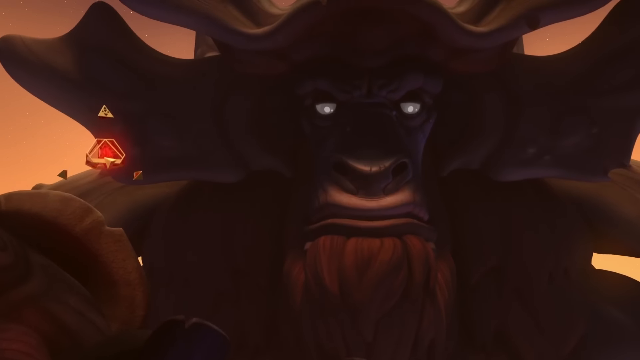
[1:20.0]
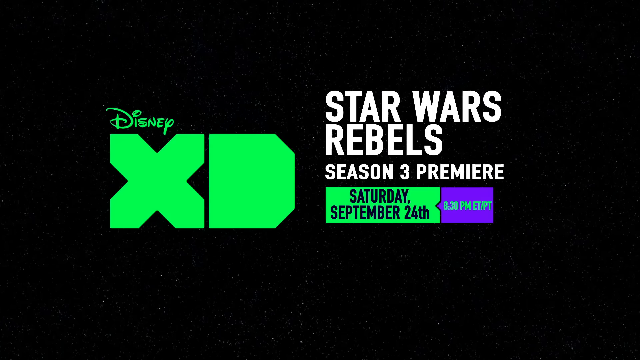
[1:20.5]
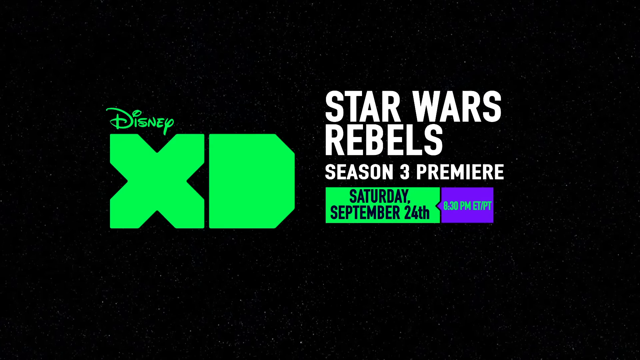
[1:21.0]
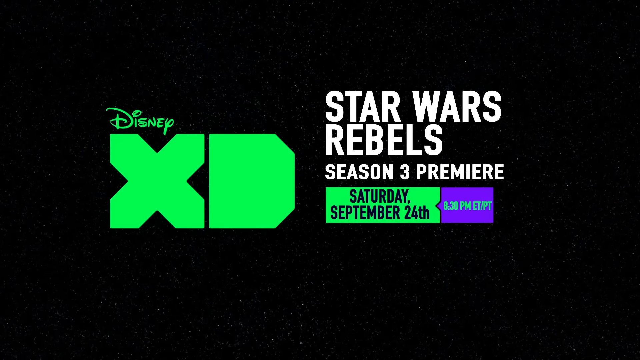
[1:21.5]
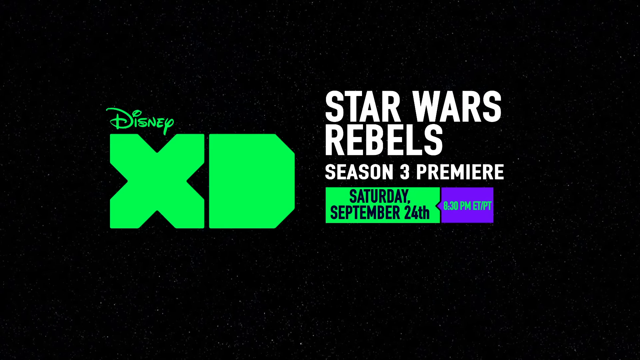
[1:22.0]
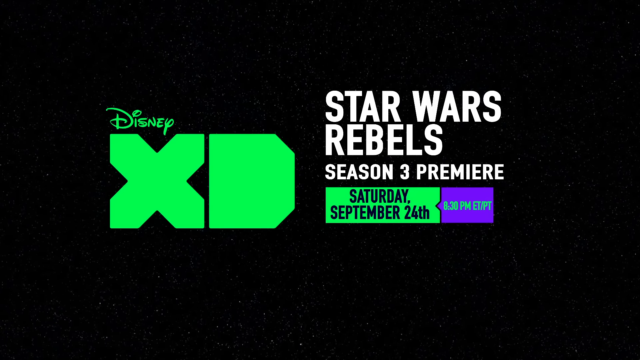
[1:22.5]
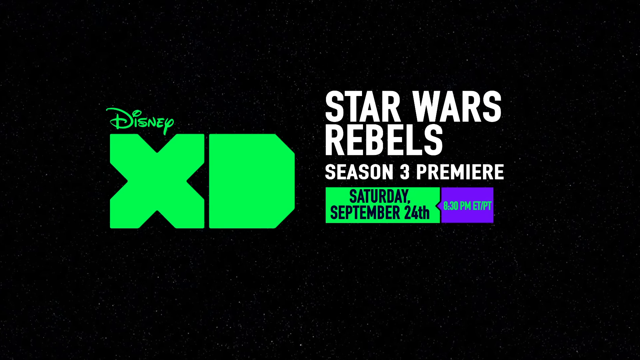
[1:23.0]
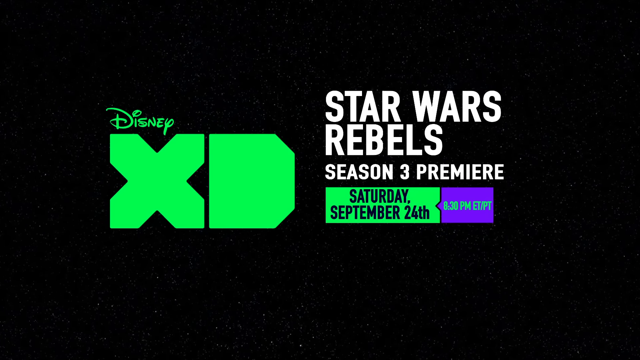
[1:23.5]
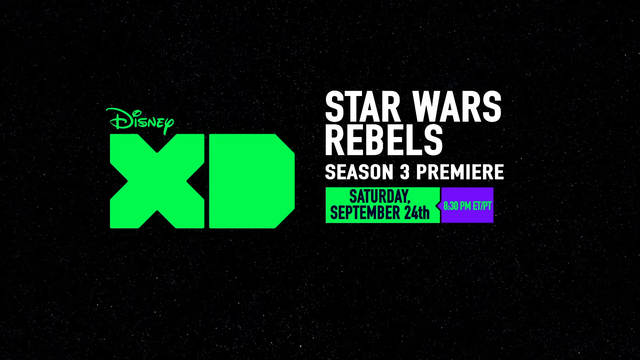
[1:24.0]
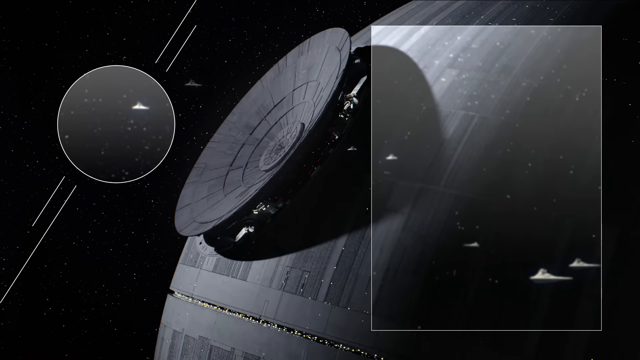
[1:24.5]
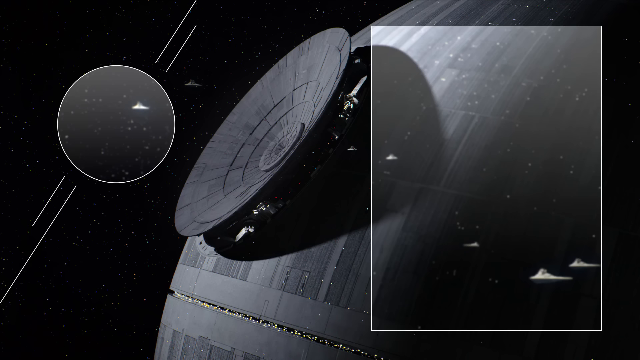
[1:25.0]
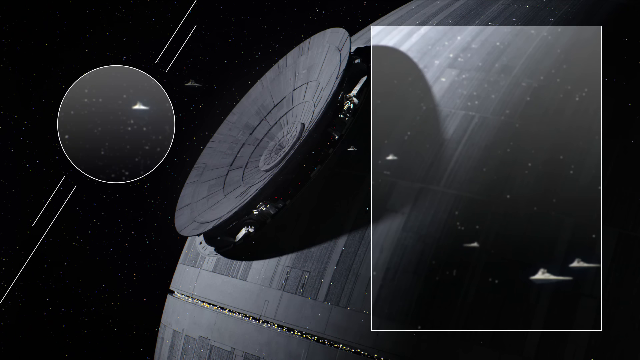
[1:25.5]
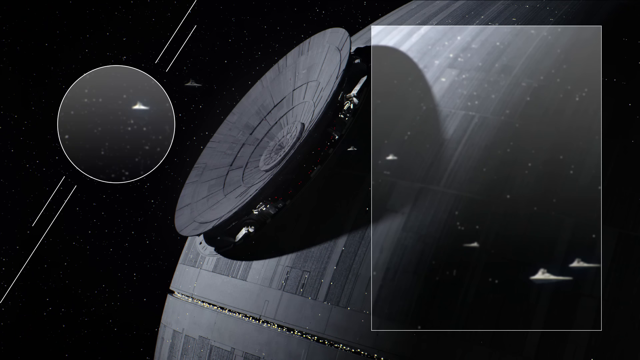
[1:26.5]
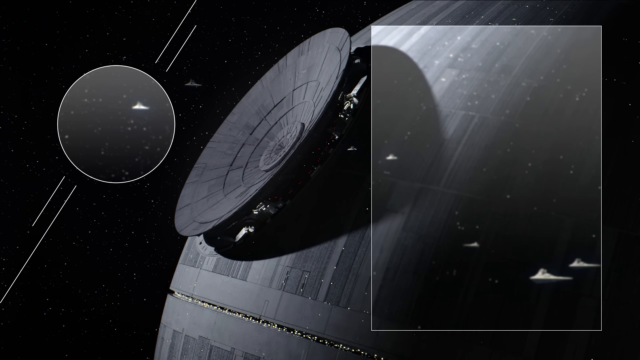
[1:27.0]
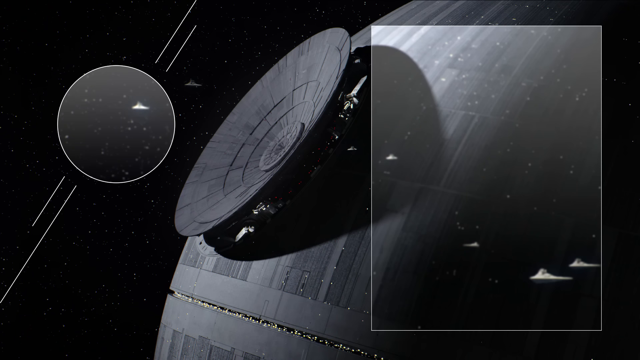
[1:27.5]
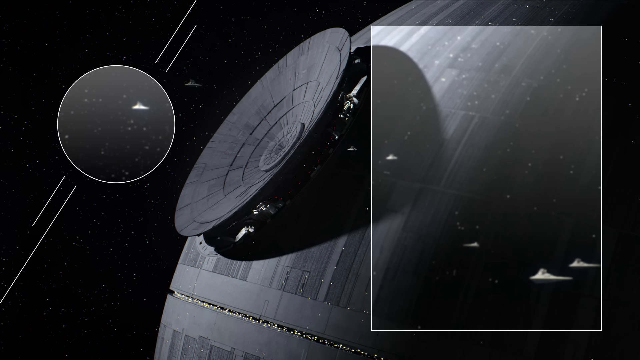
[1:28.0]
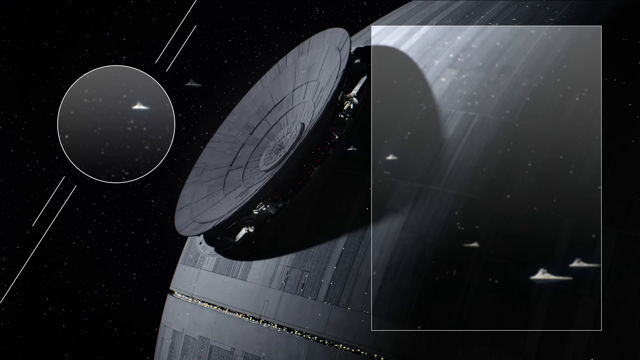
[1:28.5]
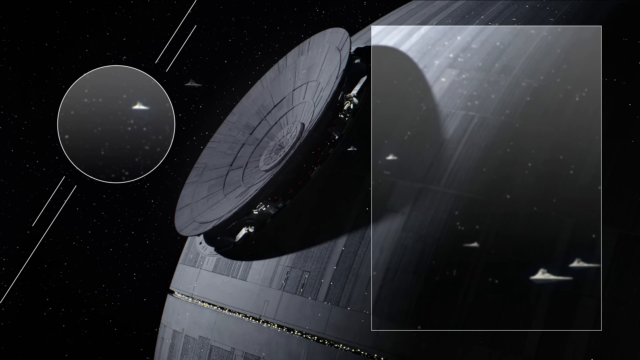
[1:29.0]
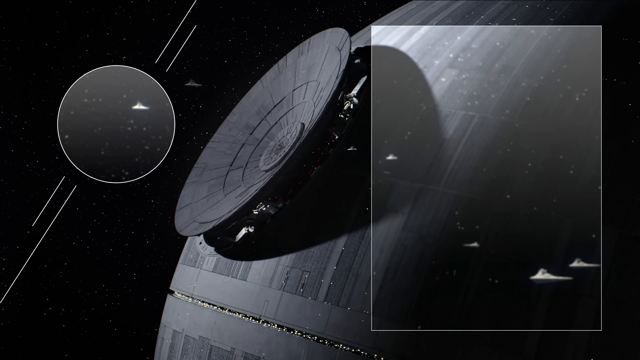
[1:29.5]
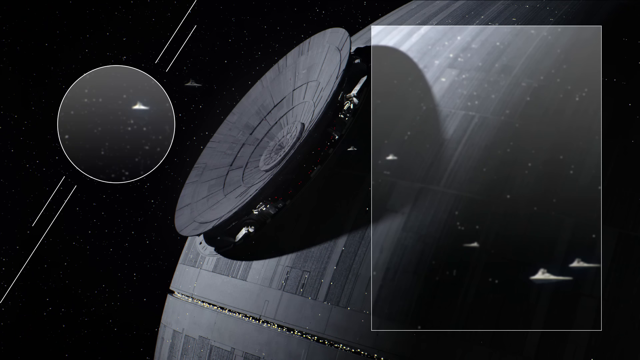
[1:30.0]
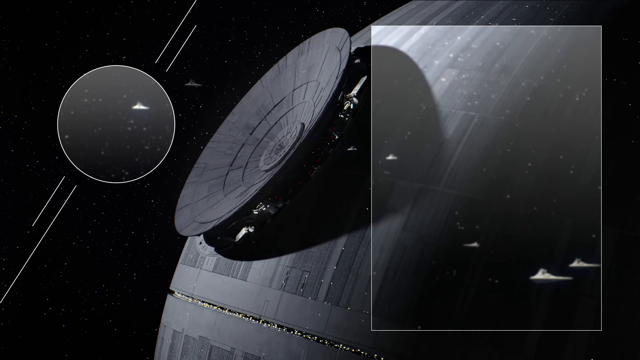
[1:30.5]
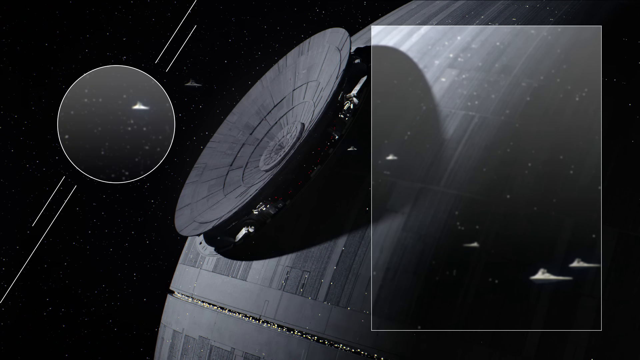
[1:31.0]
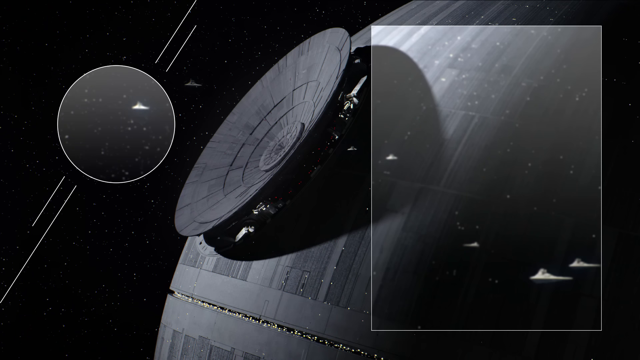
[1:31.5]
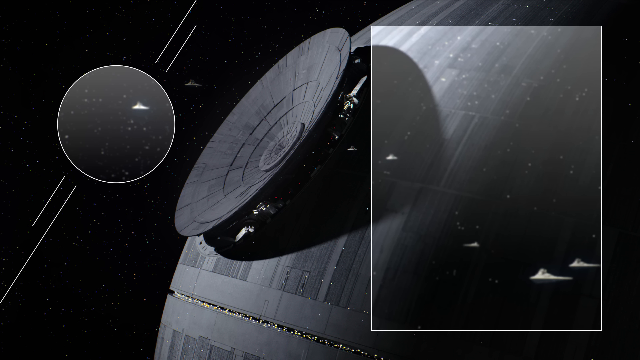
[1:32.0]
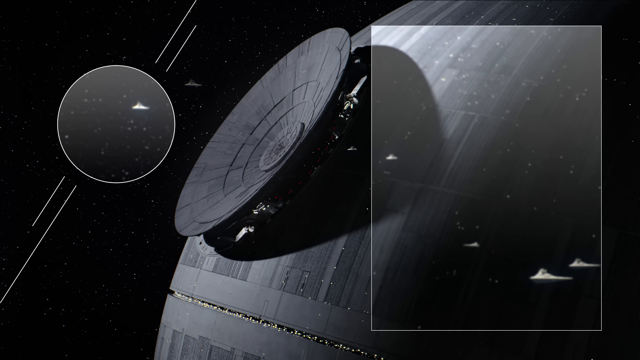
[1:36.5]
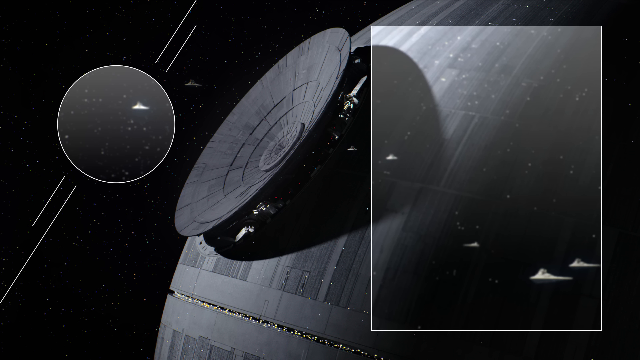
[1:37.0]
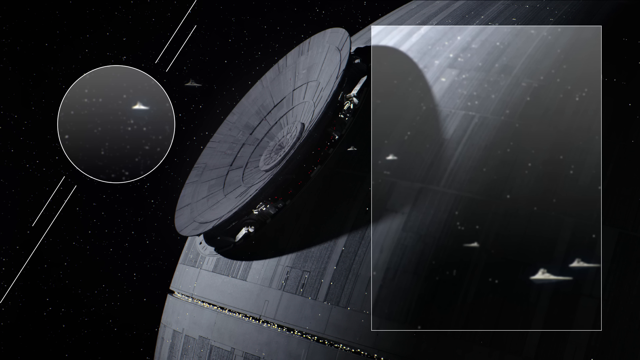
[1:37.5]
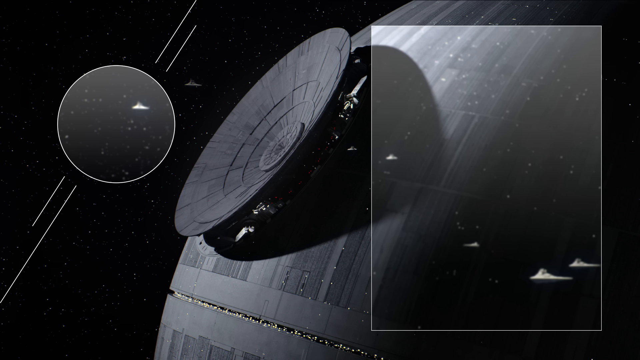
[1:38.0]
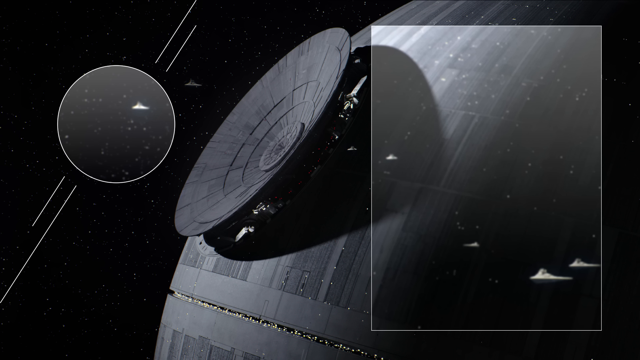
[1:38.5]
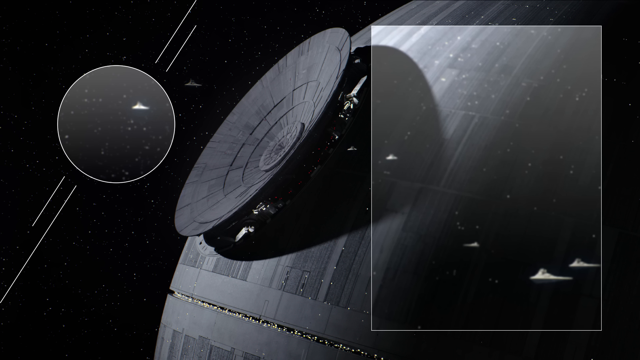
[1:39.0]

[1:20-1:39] A close-up shows the face of a large beast with large, wide horns around its head and off its forehead. It has no hair on top but a large beard coming from its chin, and its face looks like a cross between an ape and a bull. On the left side of the screen, a small glowing pyramid floats above the monster's hand, with the tips of each of its corners floating separately beside it. The monster's head turns ever so slightly, and his eyes have a concerned look. The scene changes to text reading "Disney XD Star Wars Rebels season 3 premiere Saturday, September 24th at 8.30 pm" against a background full of stars. It then switches to the Death Star, with close-up images of small ships coming in from the side to fight it. The Death Star is rendered photorealistically.